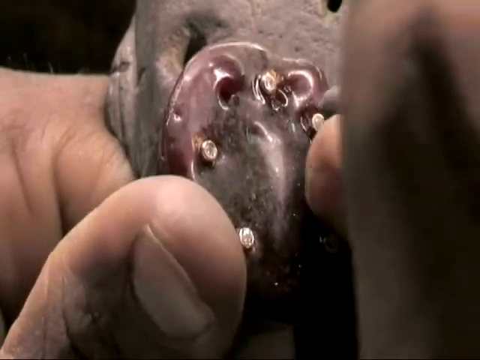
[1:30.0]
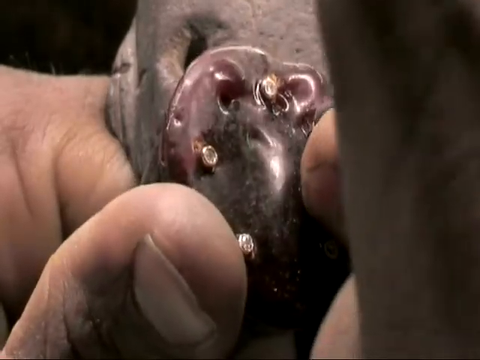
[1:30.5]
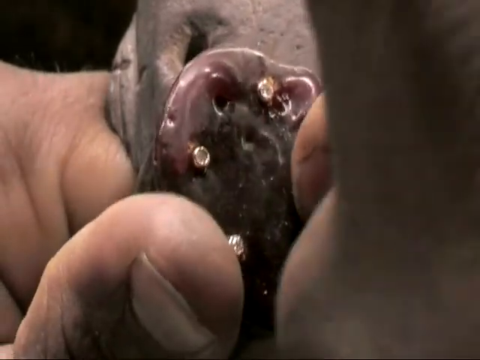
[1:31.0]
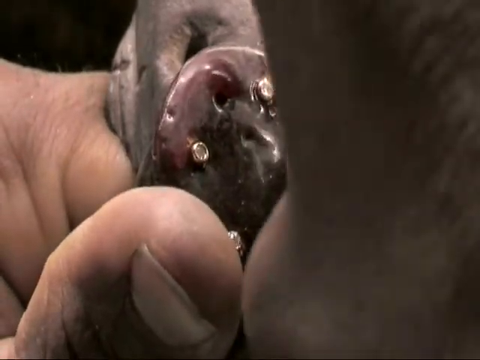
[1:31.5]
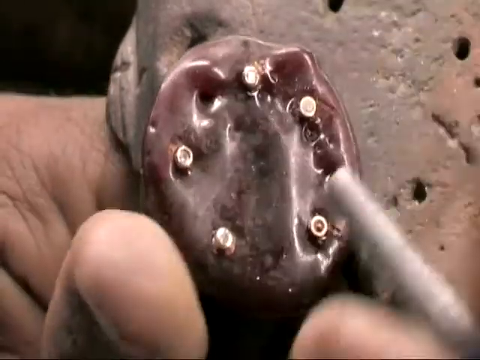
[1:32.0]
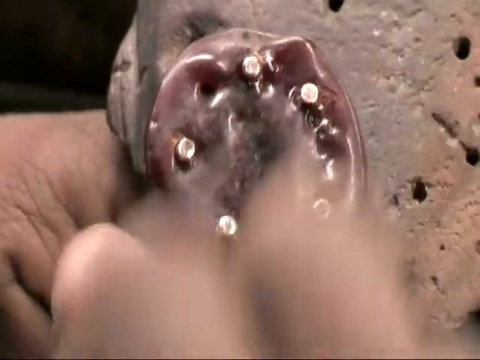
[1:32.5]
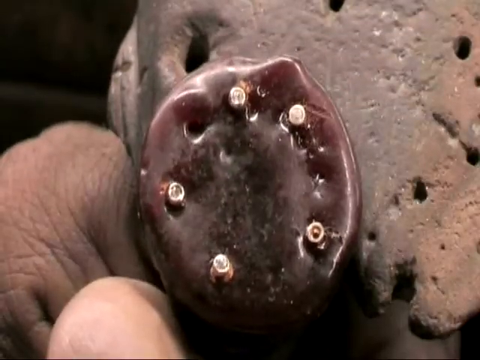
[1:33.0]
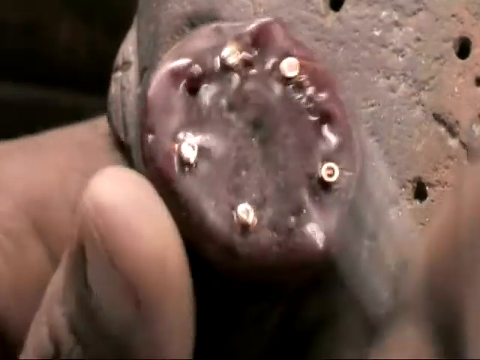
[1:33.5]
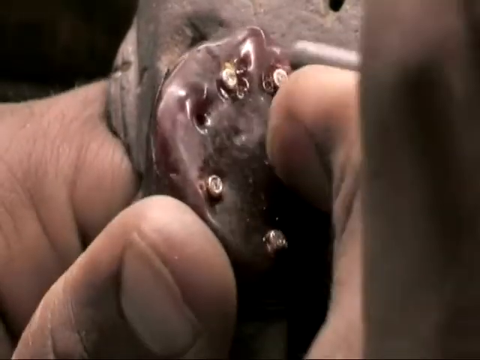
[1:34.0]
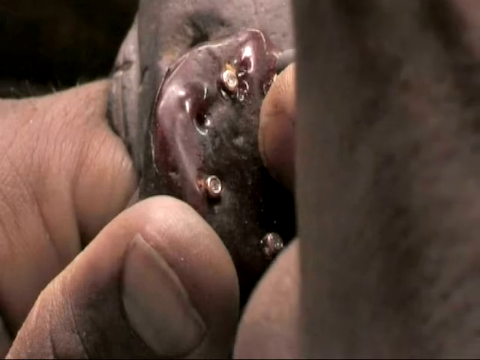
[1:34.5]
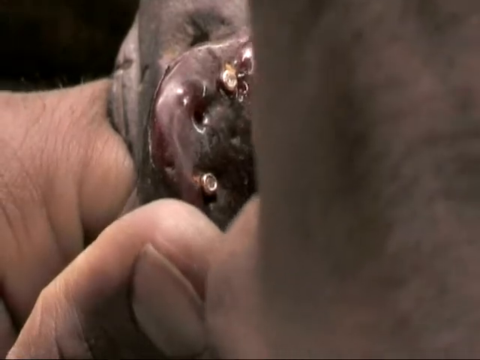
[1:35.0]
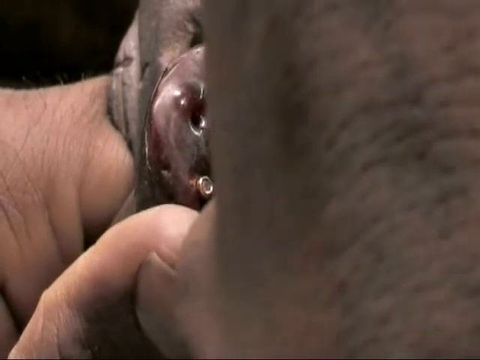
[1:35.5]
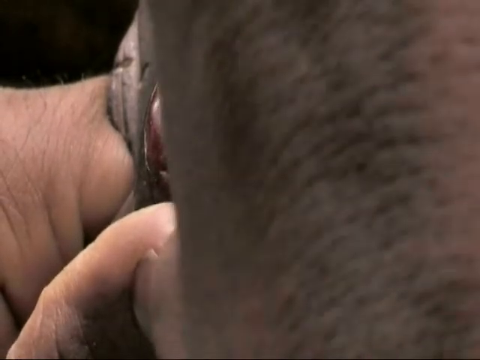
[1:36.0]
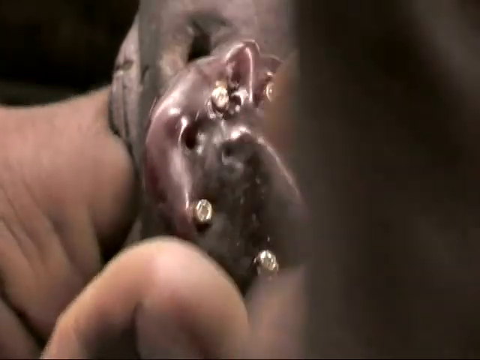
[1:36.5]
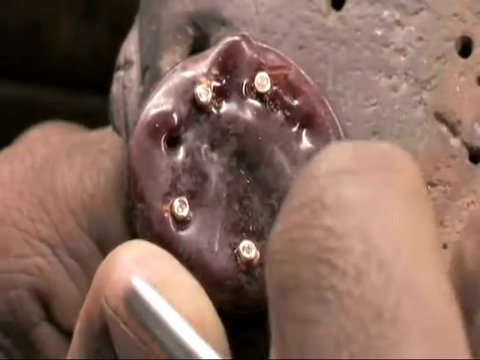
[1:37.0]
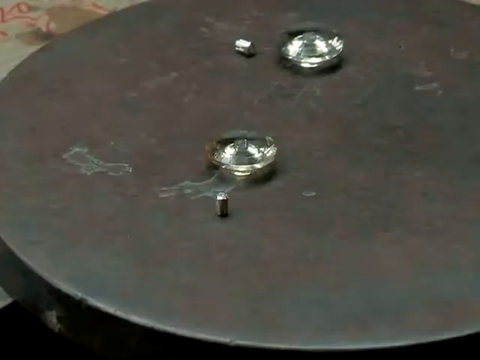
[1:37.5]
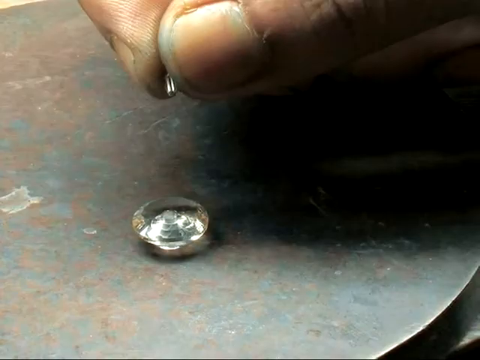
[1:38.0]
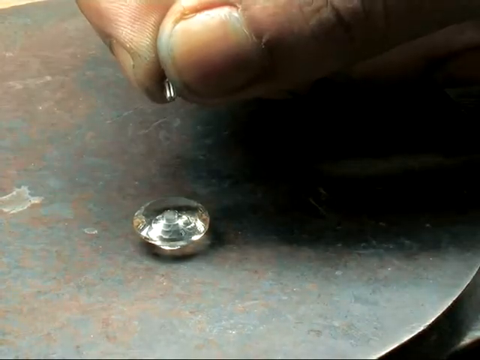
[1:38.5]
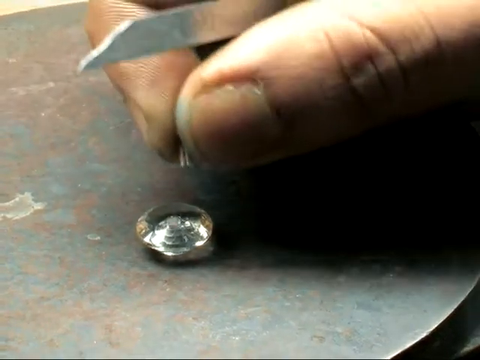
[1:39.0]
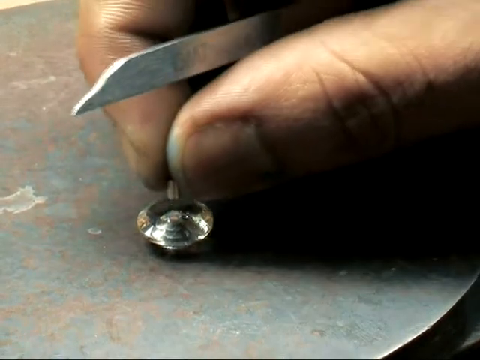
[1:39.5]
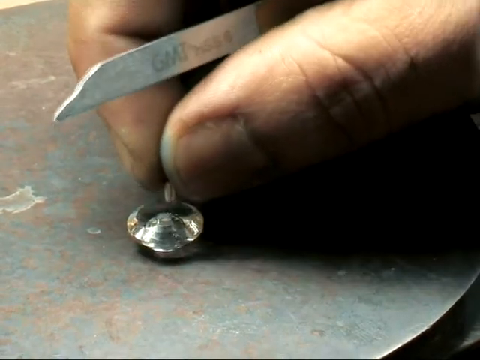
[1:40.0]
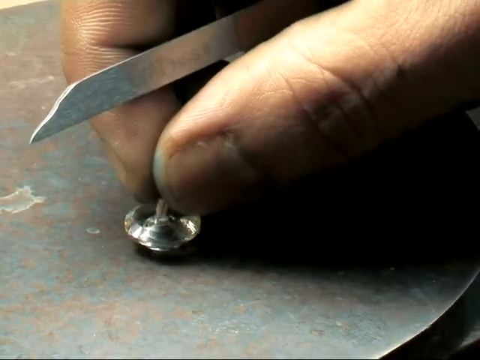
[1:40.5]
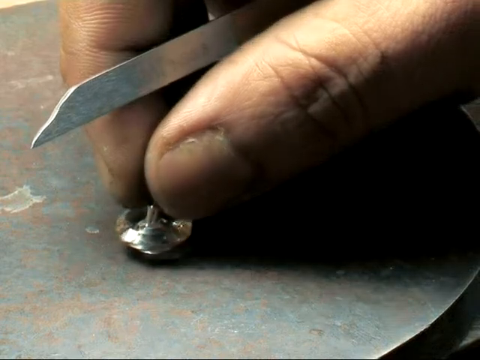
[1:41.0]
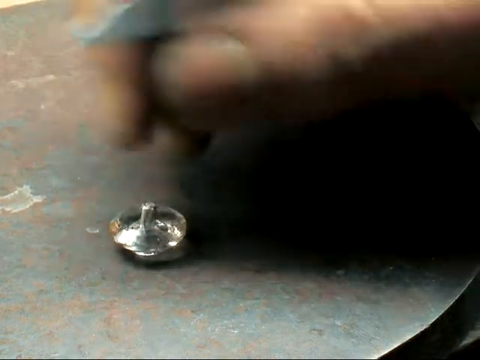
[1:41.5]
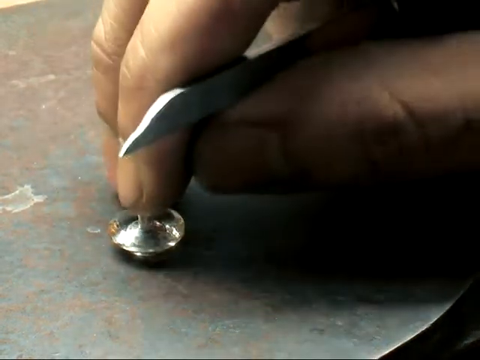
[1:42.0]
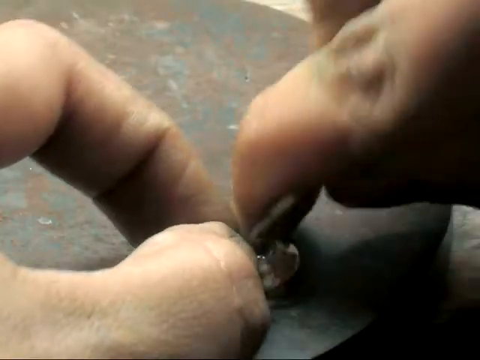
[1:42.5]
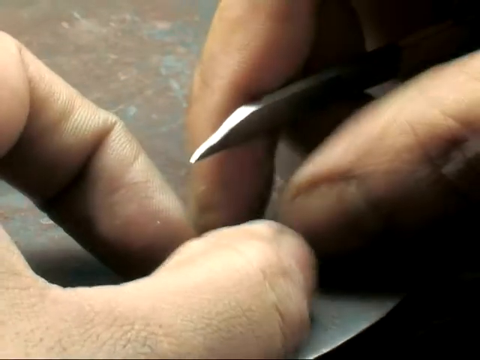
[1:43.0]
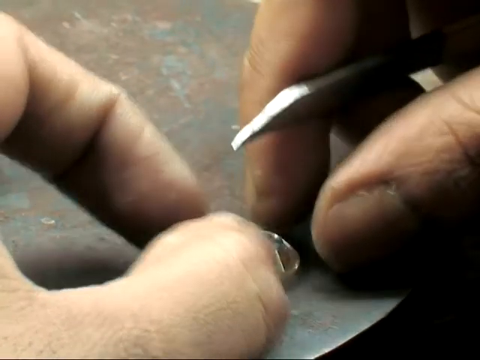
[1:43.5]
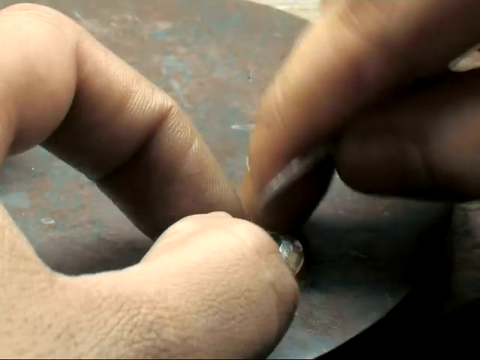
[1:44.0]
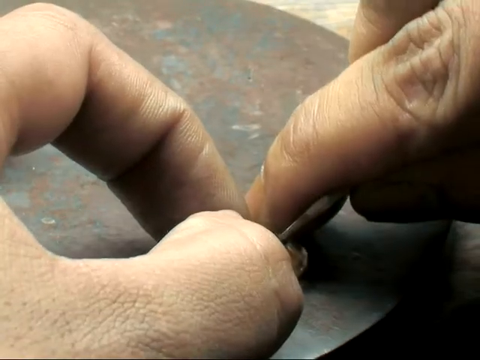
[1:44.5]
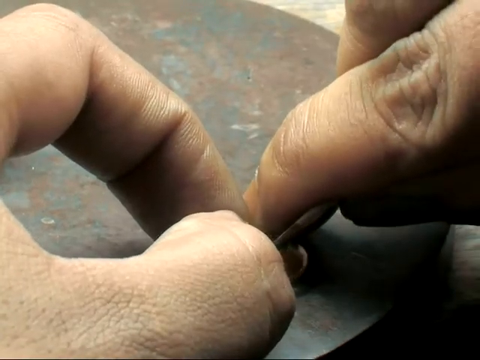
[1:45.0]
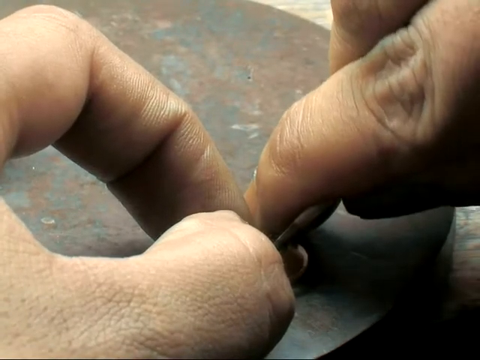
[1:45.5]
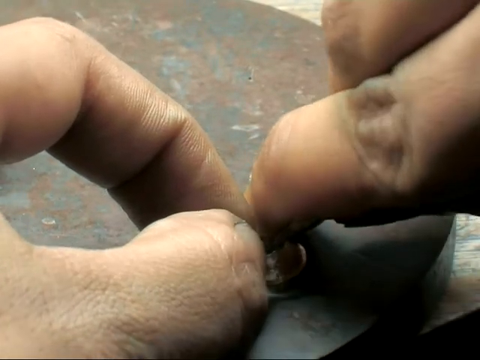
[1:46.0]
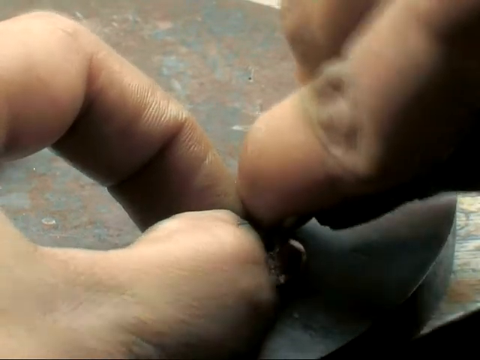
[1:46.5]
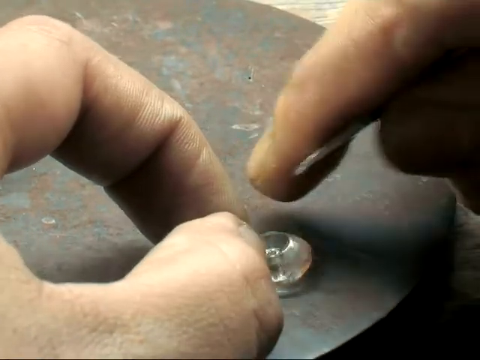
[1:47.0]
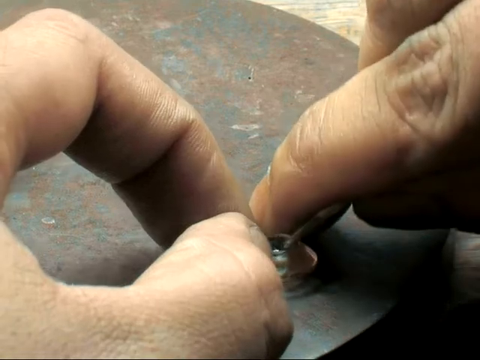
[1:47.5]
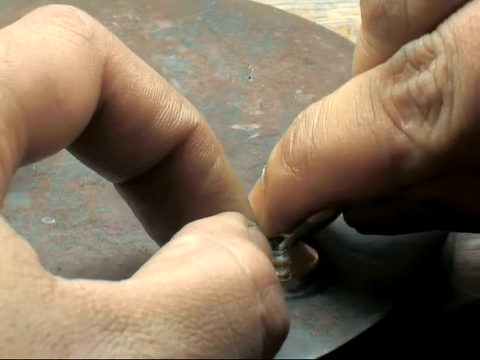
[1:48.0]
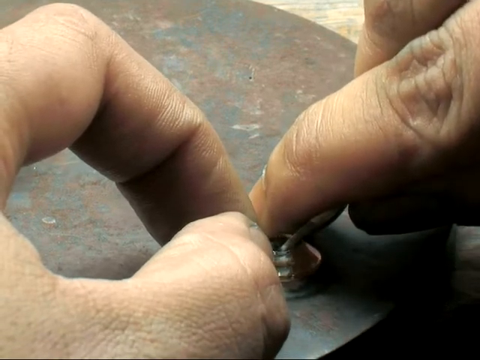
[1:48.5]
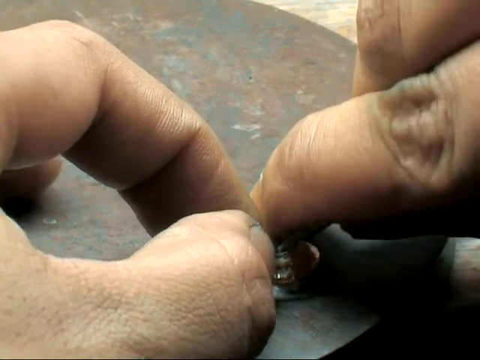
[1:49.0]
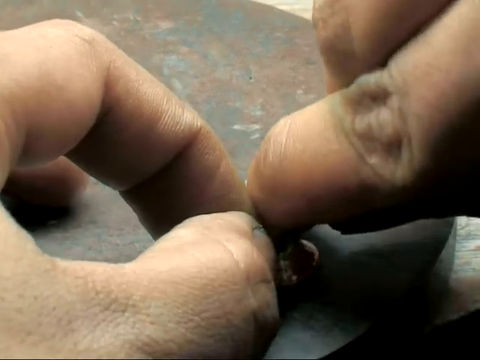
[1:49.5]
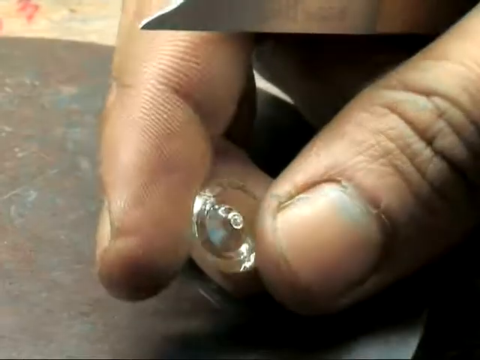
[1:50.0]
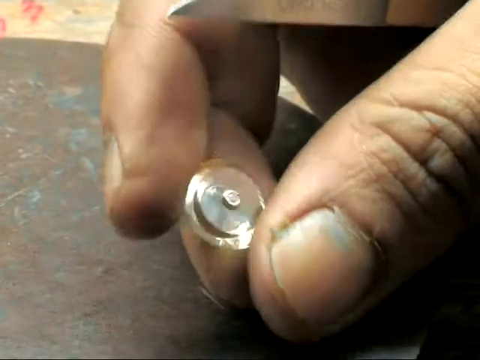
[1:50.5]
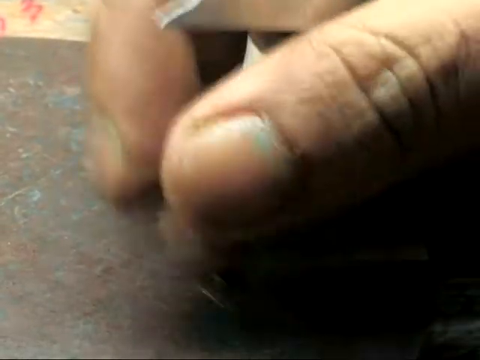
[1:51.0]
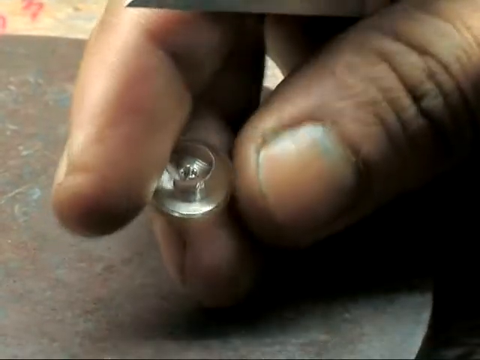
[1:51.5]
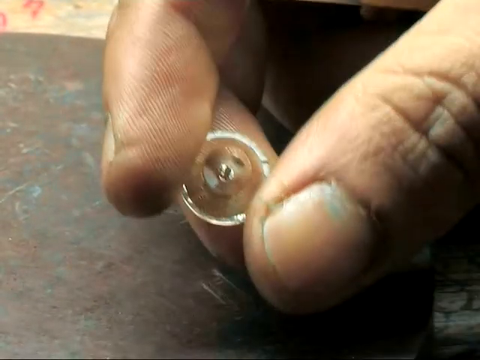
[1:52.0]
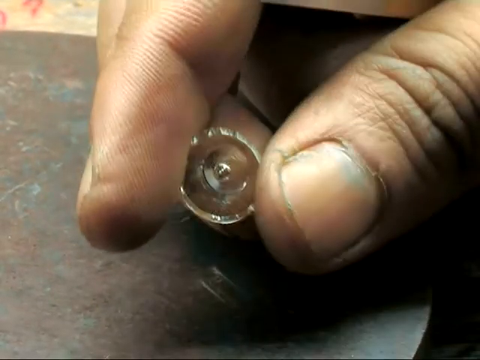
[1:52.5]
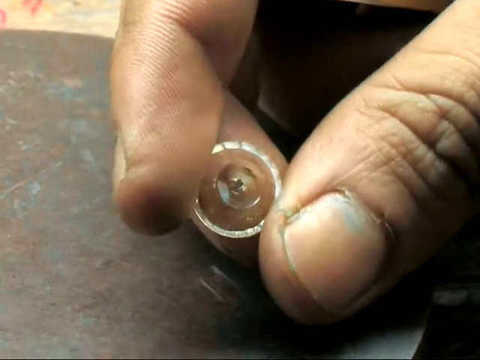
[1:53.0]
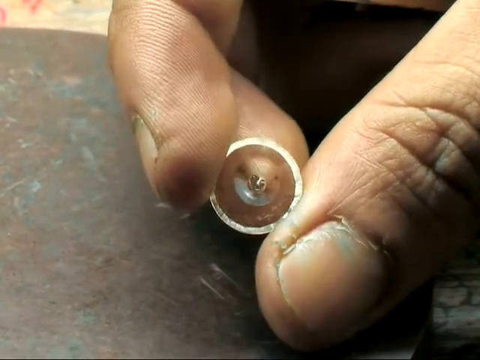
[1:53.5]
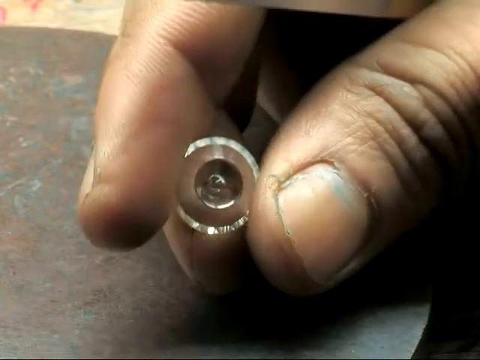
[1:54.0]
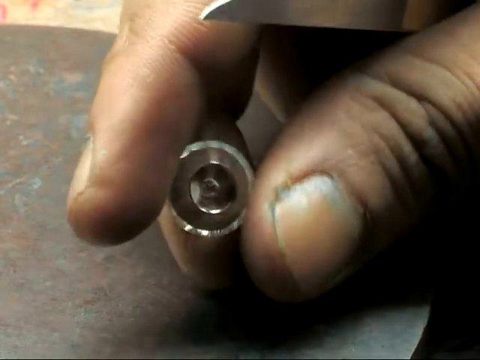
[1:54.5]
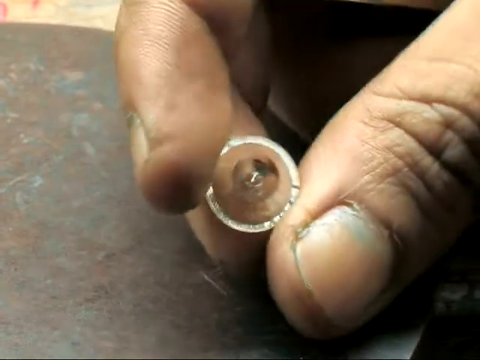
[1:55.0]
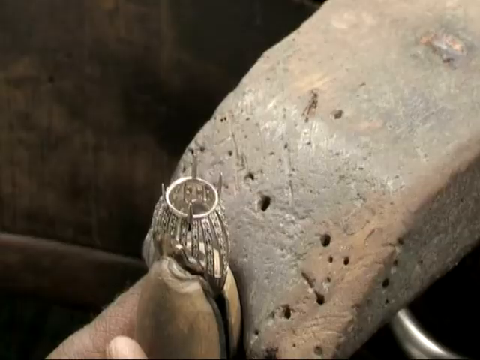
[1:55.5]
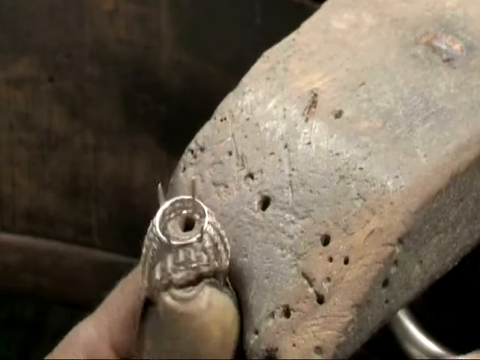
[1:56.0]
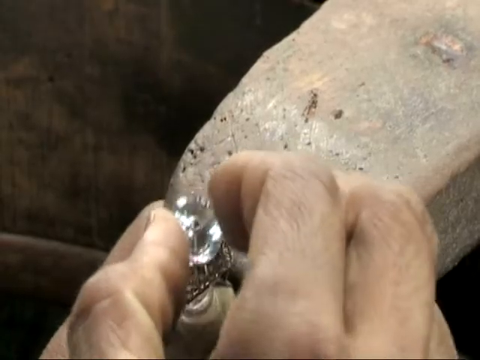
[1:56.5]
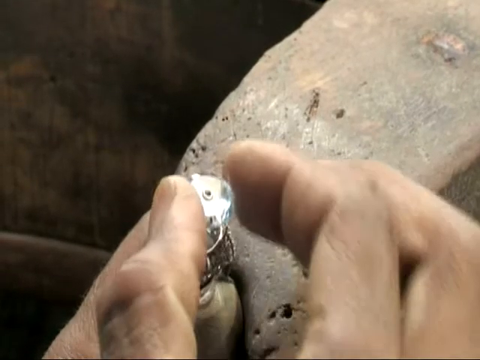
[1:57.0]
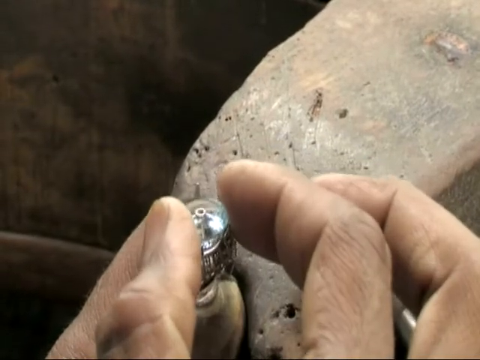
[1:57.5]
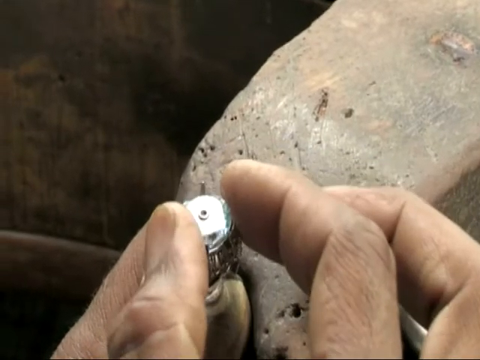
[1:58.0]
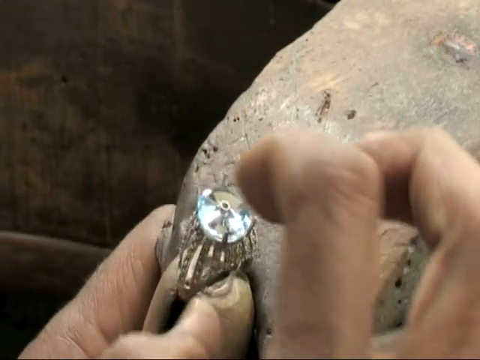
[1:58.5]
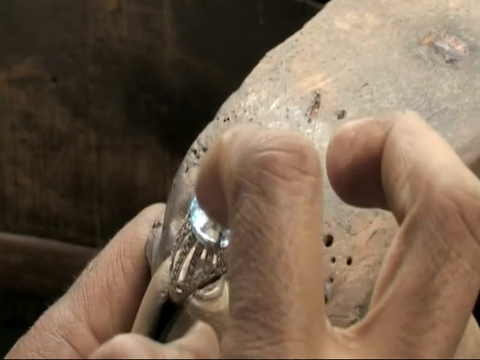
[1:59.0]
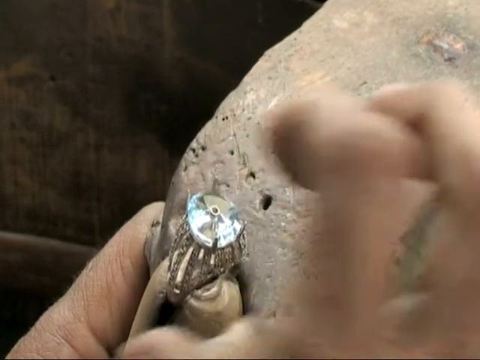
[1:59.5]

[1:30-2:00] A man is drilling down the inside of the ring on some type of table, using a tool that seems to shape the inside and smooth out its surface. A screen then shows that the ring is a 9 carat diamond. The process of creating the ring continues: diamonds are placed on the ring using some type of special glue and a tool that picks up the diamonds and places them. The faces of the people working on the ring cannot be seen, only their working hands. No animals are seen.